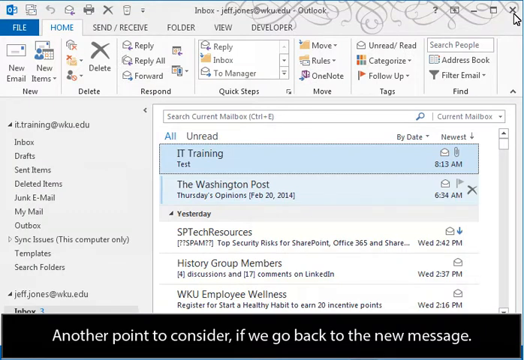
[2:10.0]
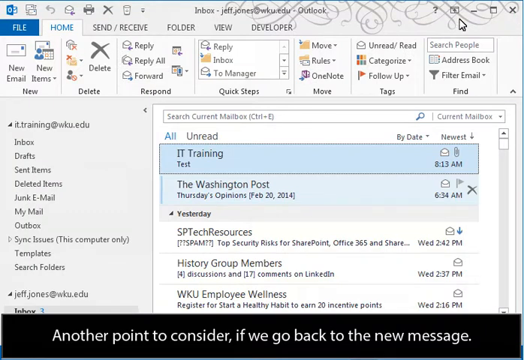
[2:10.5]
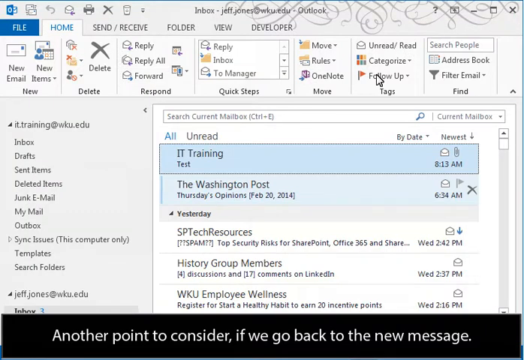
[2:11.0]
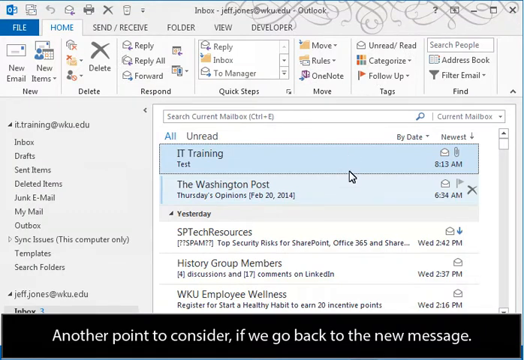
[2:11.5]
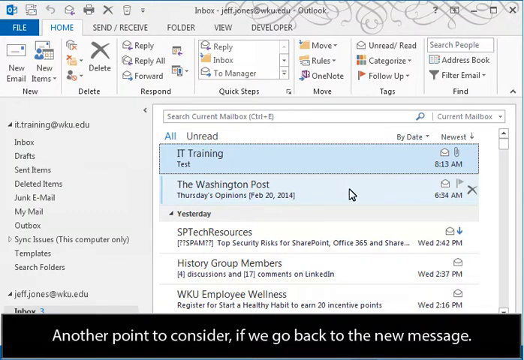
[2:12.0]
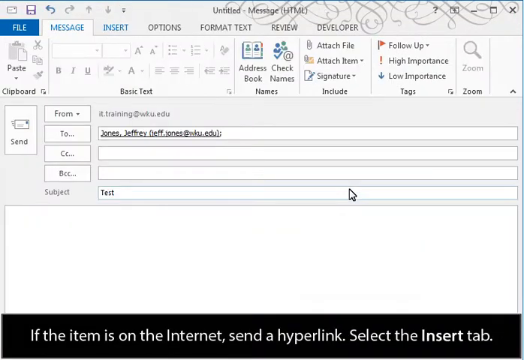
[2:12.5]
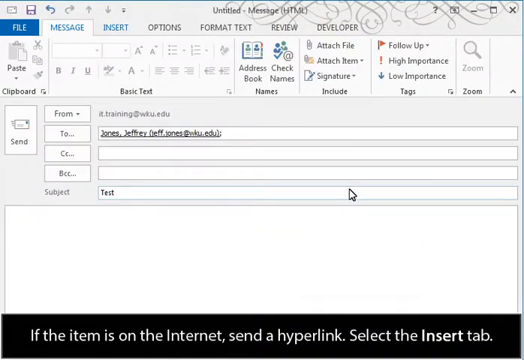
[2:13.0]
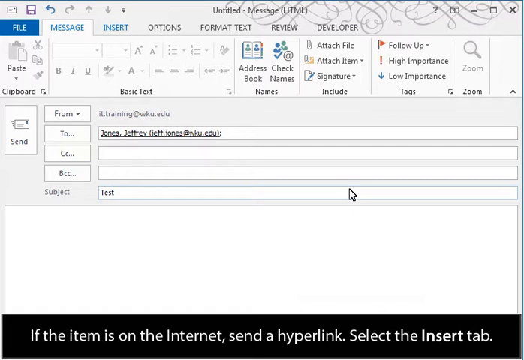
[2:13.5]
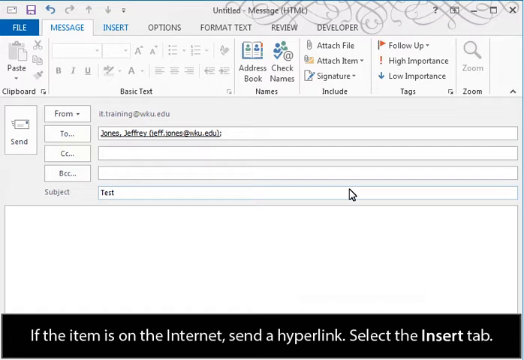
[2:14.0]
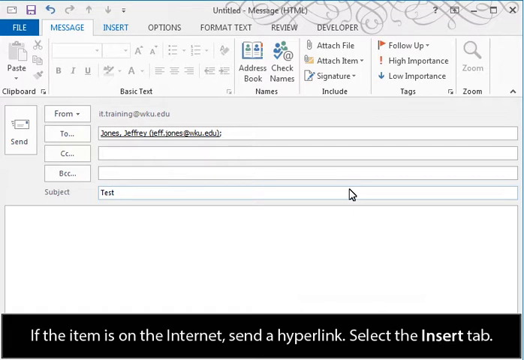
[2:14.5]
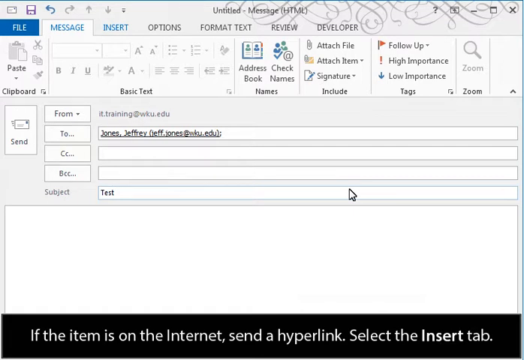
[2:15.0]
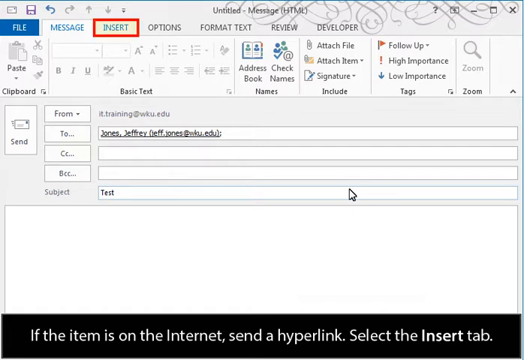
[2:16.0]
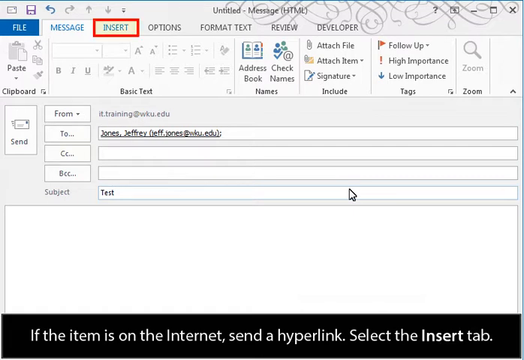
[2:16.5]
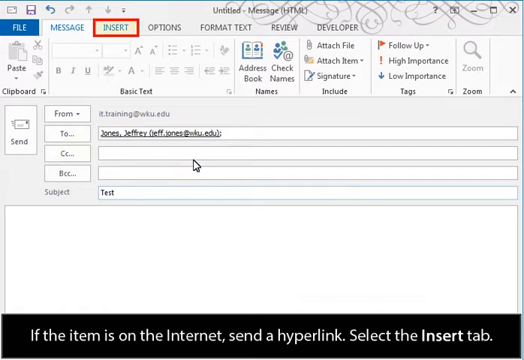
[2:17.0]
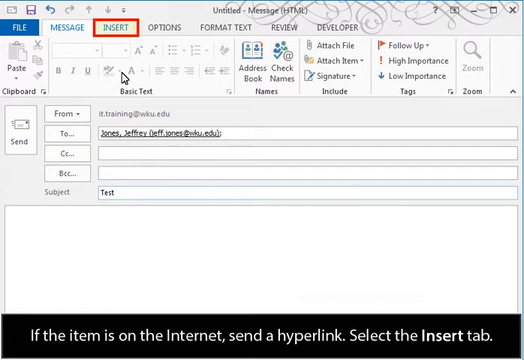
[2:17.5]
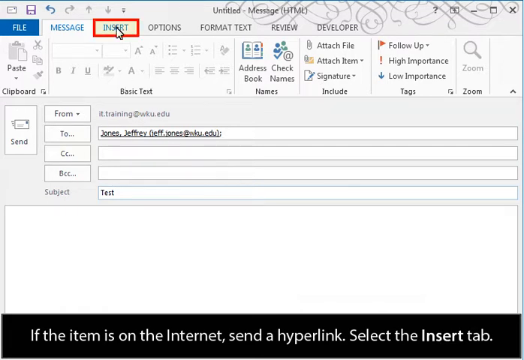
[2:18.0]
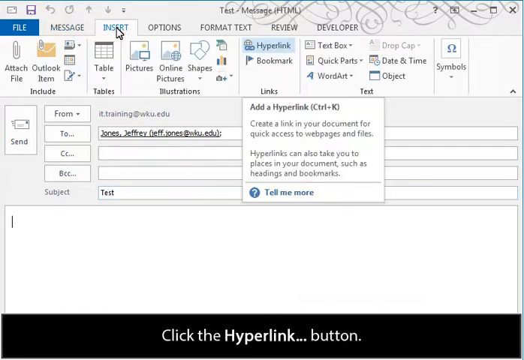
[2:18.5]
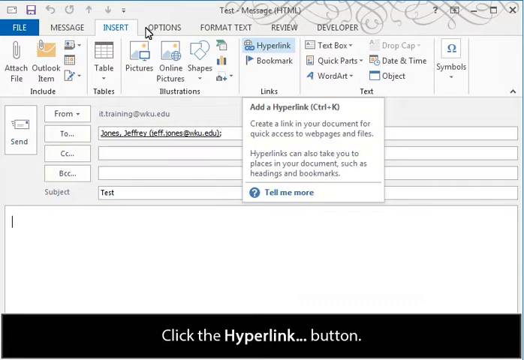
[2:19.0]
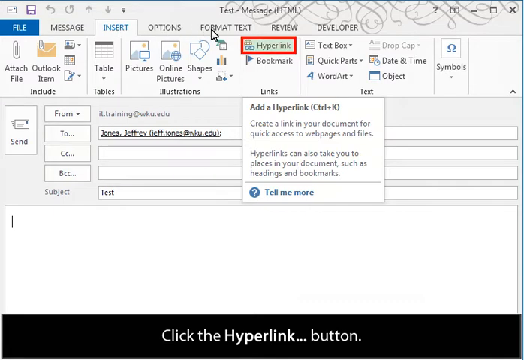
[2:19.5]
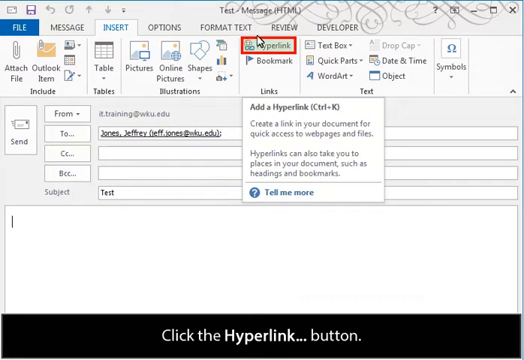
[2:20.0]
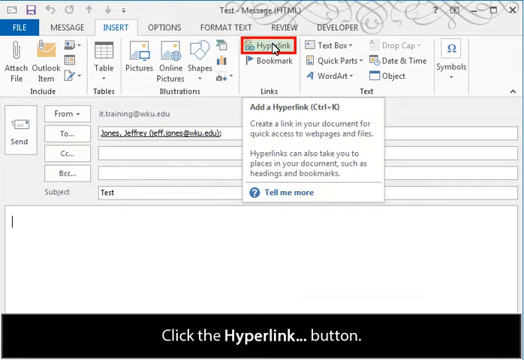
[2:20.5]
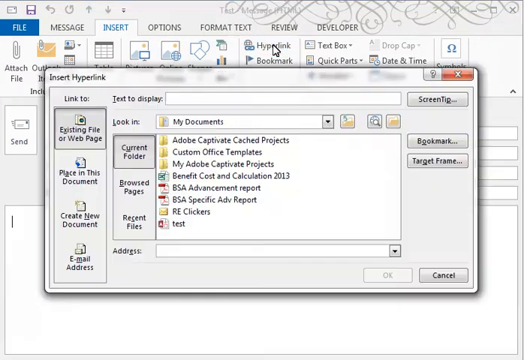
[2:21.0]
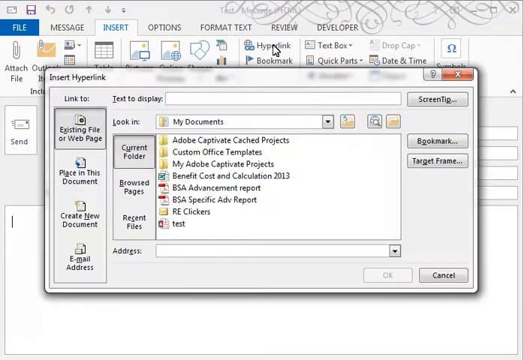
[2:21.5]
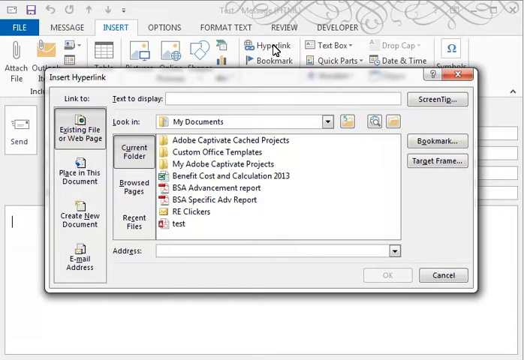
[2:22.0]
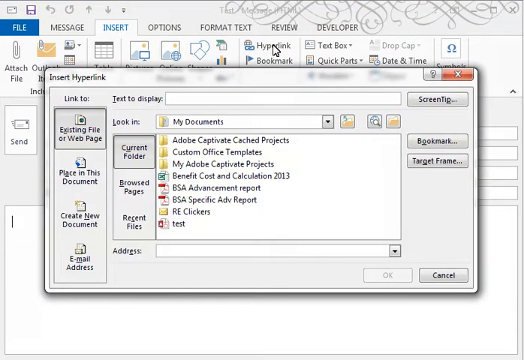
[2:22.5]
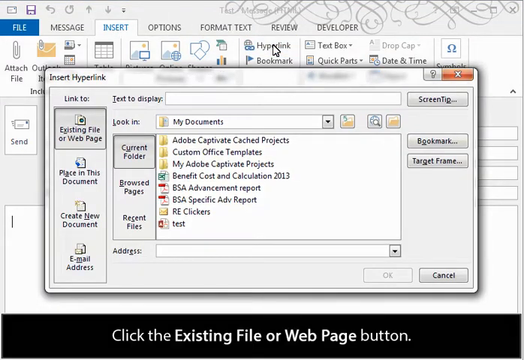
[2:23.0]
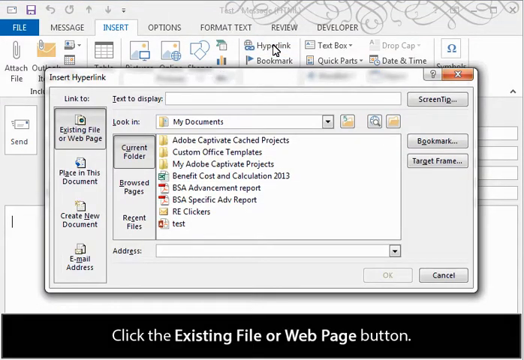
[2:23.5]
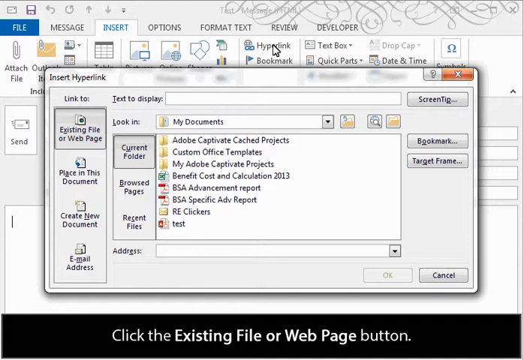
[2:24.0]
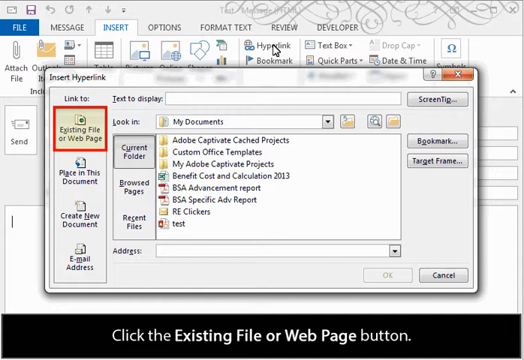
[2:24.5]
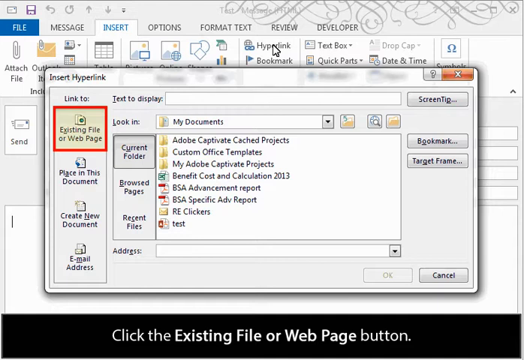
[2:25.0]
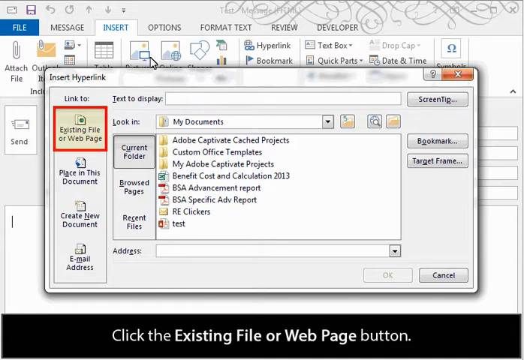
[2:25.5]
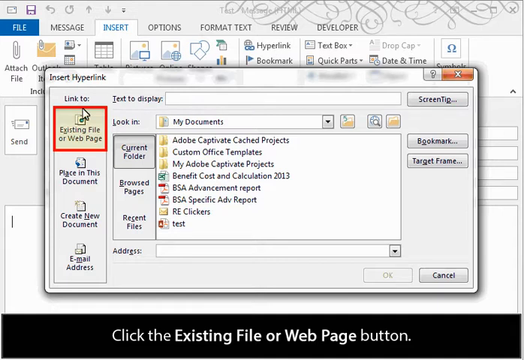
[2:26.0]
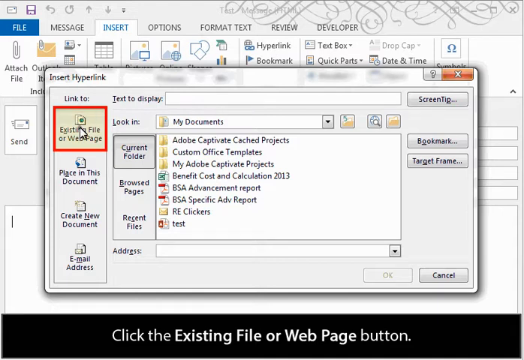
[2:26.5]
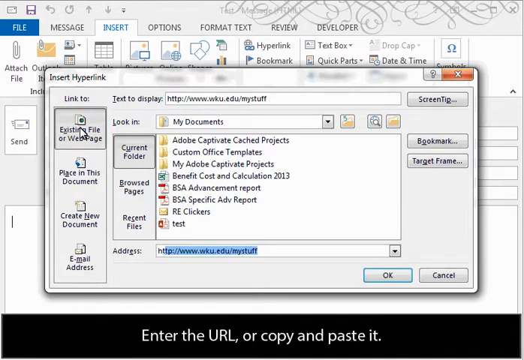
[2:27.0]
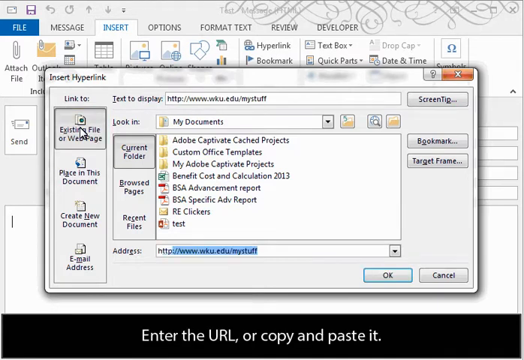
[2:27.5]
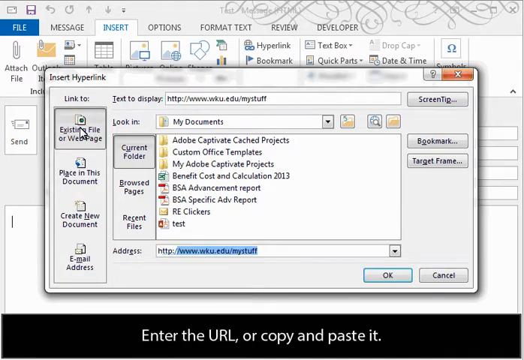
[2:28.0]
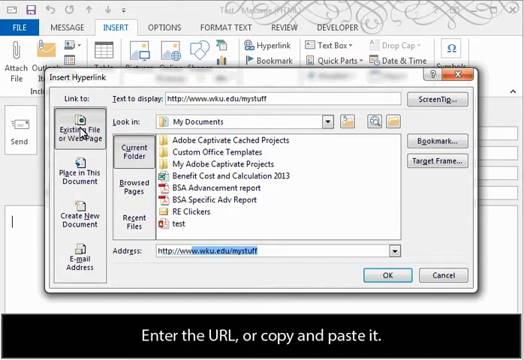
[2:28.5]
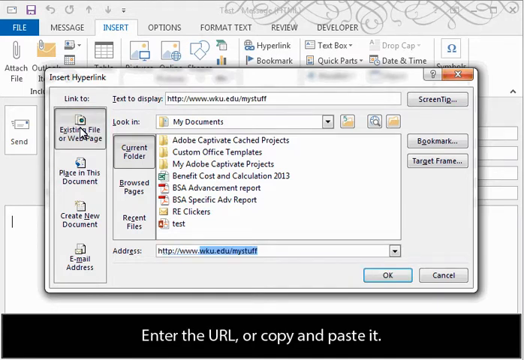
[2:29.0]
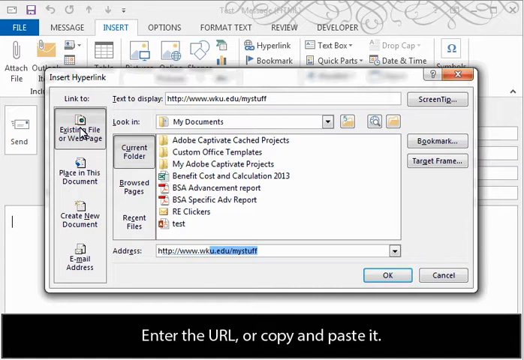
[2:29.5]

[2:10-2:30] The Outlook inbox for jeff.jones@wku.edu is shown. The left panel lists the mailboxes, such as inbox, drafts and sent items, and the right panel shows all the emails in the current mailbox. The top two emails are highlighted in blue, and the user seems to click the second email, titled "the Washington Post." An email message form comes up with "it.trainingwku.edu" in the From section, "Jones,Jeffrey (jeff.jones@wku.edu)" in the To box, and the word "test" in the subject line. On the top menu, the insert option is highlighted with a red square. The user clicks that tab, bringing up a panel of buttons, and the hyperlink button in the middle of the screen is highlighted with a red square. The user clicks it, opening the insert hyperlink window, which shows directories for selecting and inserting files. On the left panel, a button reading "existing file or web page" has a red box around it, and the user clicks it. In the address box at the bottom, the address "http://www.wku.edu/mystuff" has been added to the drop-down text box. The web address text, highlighted in blue, kind of looks like it is being unscrolled to the right as the highlight is removed, leaving just a white background.